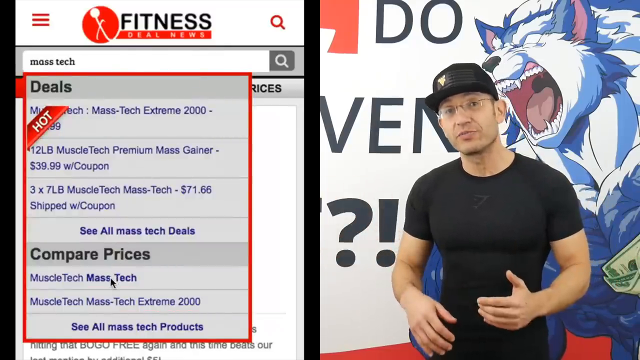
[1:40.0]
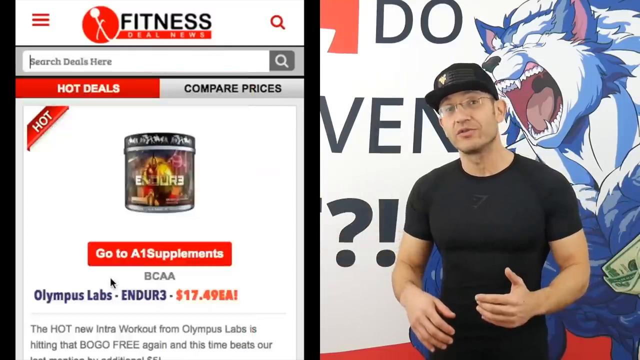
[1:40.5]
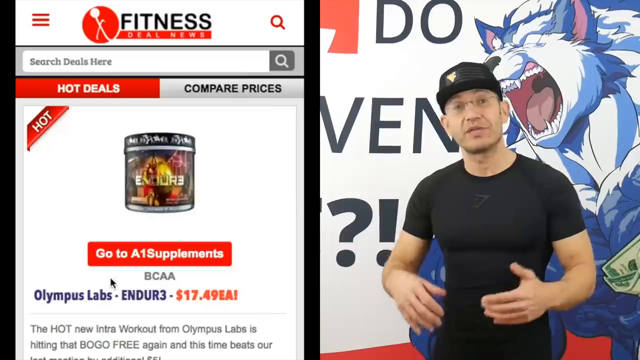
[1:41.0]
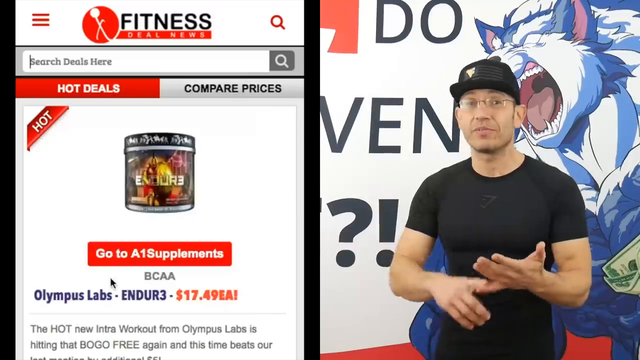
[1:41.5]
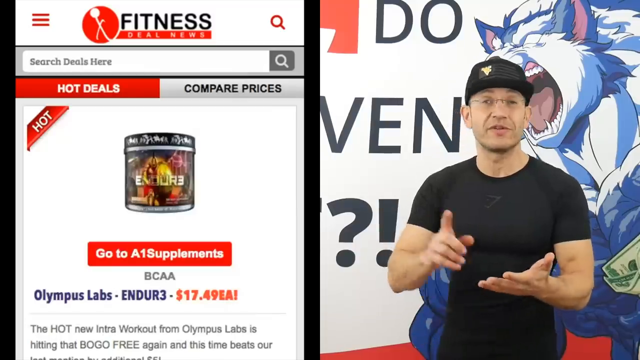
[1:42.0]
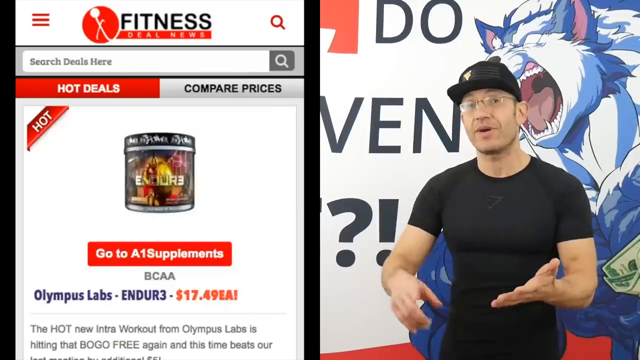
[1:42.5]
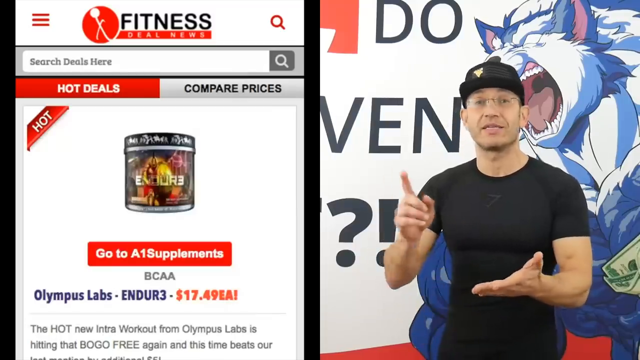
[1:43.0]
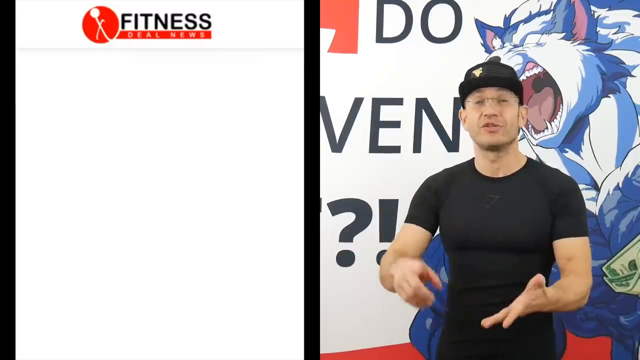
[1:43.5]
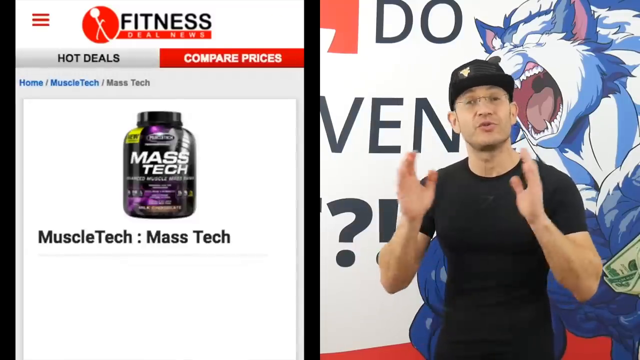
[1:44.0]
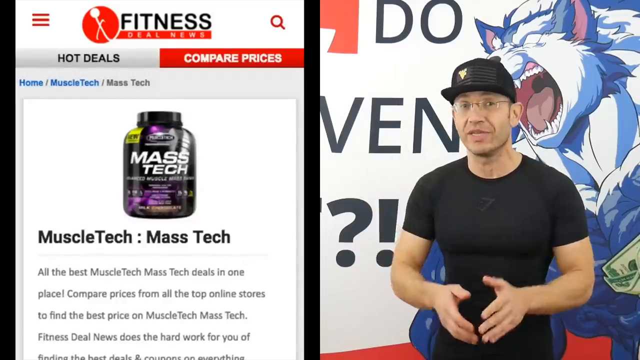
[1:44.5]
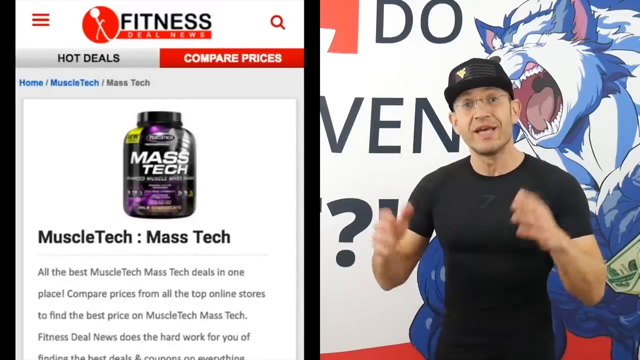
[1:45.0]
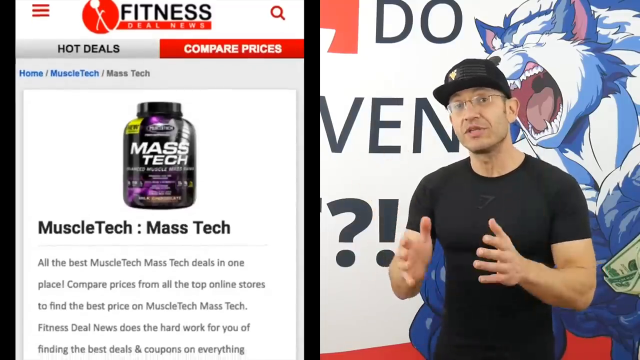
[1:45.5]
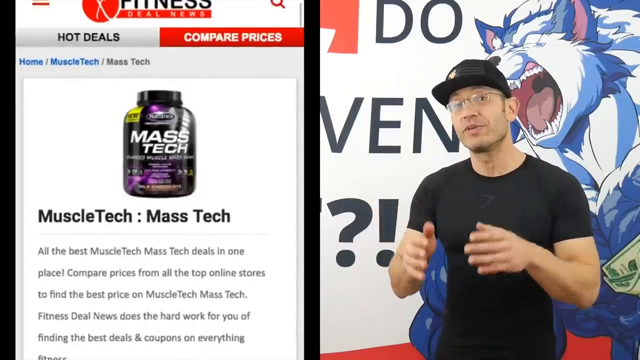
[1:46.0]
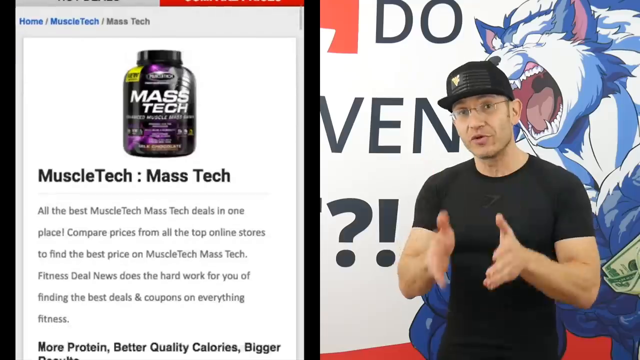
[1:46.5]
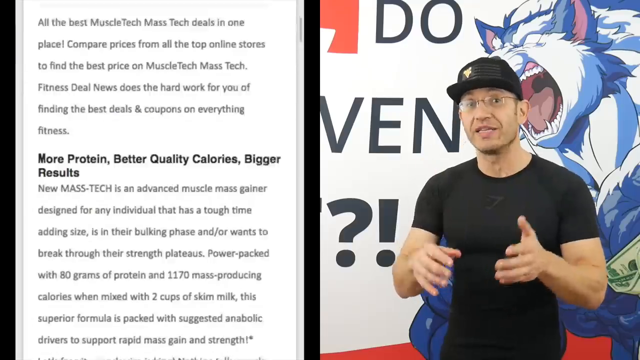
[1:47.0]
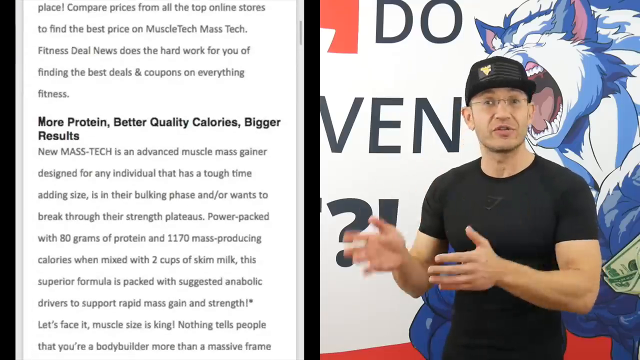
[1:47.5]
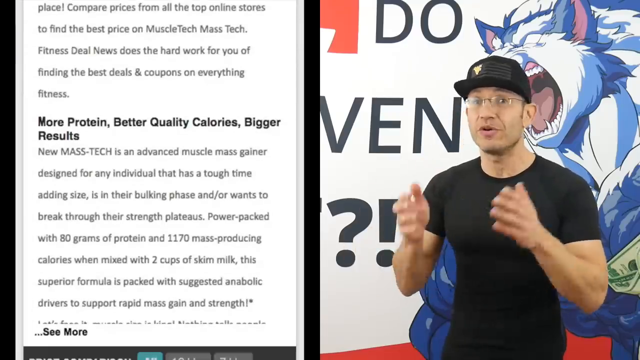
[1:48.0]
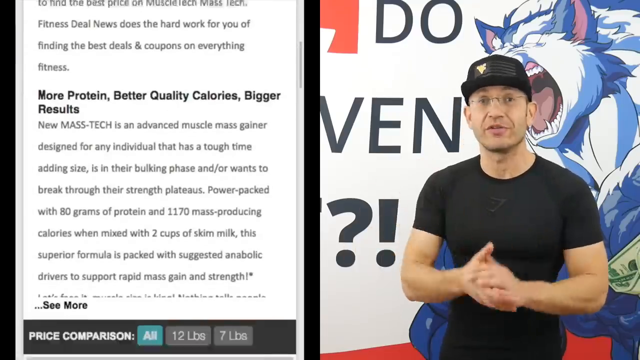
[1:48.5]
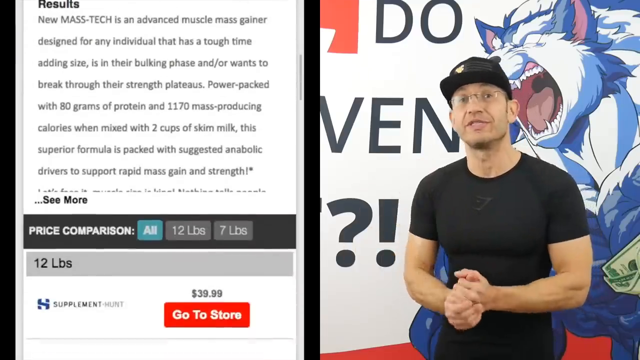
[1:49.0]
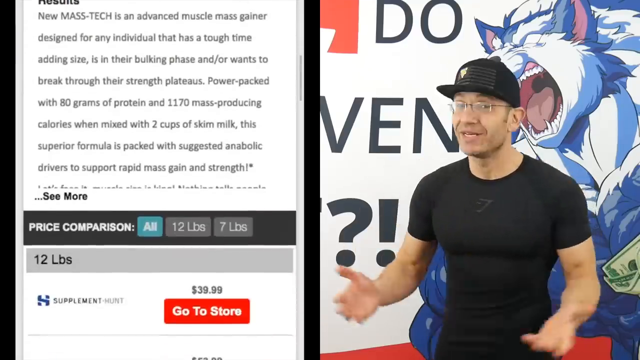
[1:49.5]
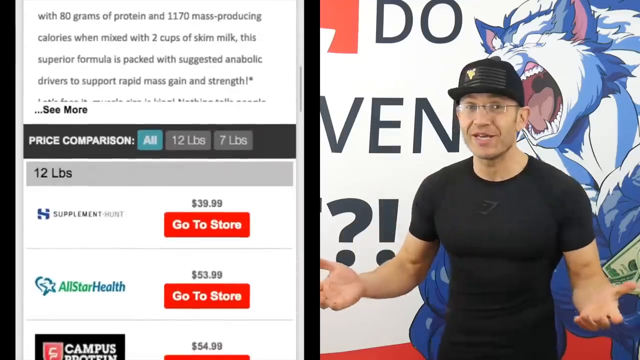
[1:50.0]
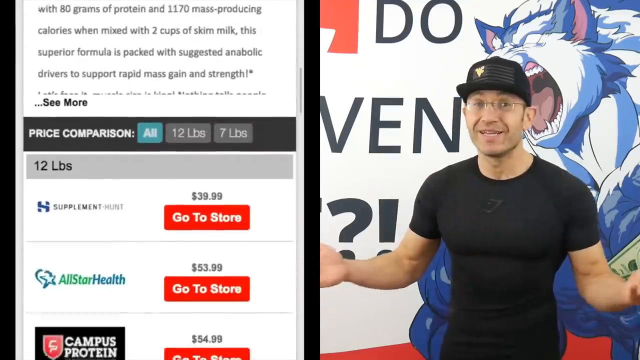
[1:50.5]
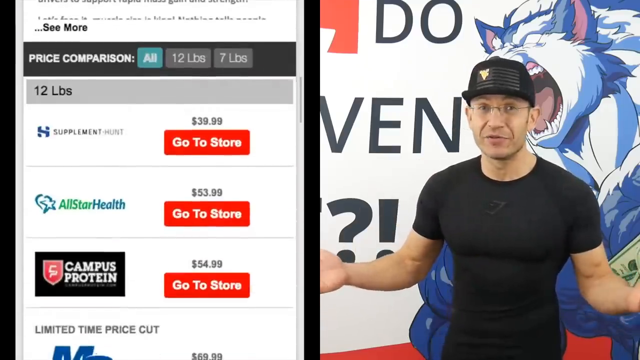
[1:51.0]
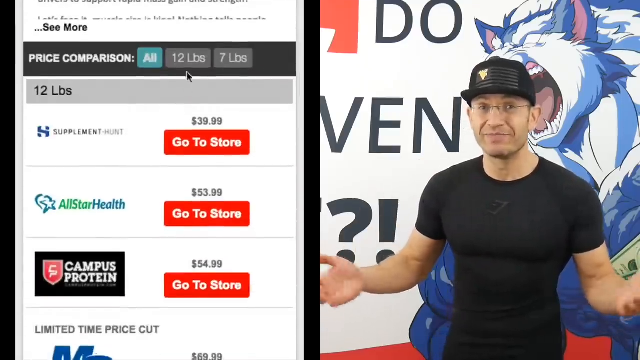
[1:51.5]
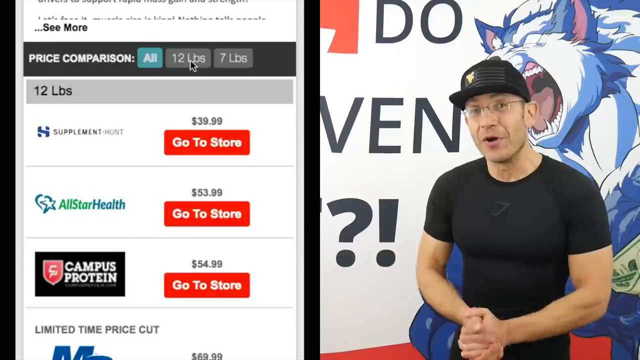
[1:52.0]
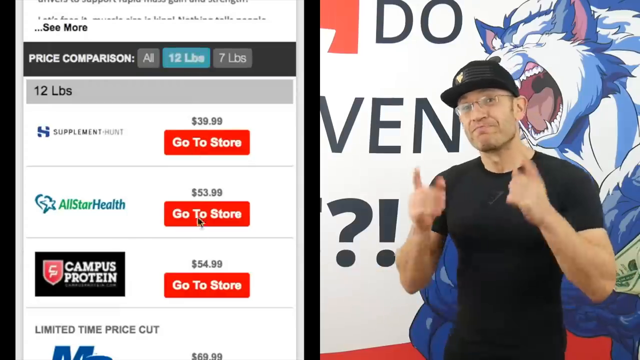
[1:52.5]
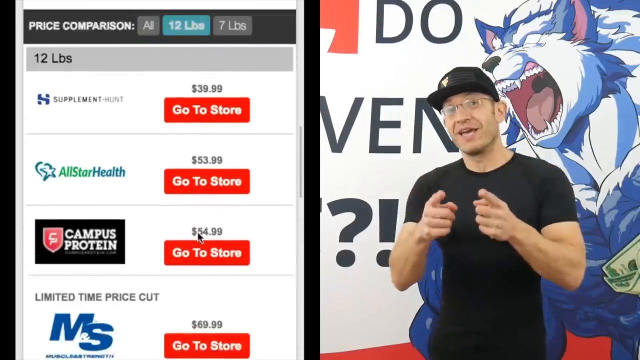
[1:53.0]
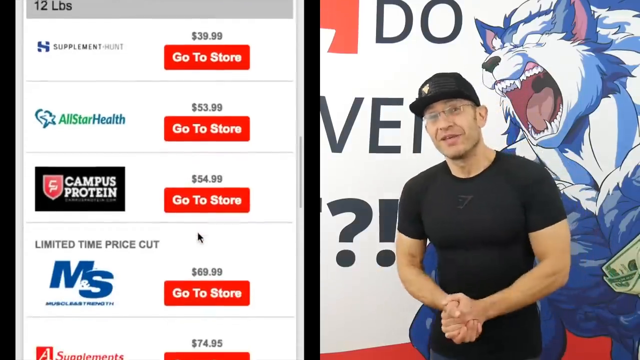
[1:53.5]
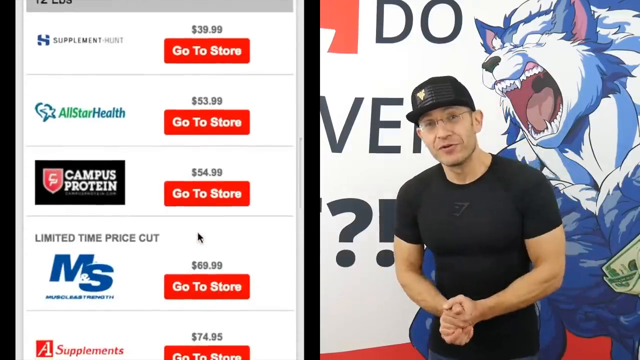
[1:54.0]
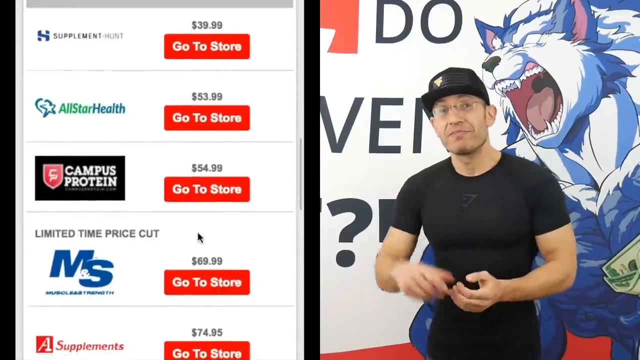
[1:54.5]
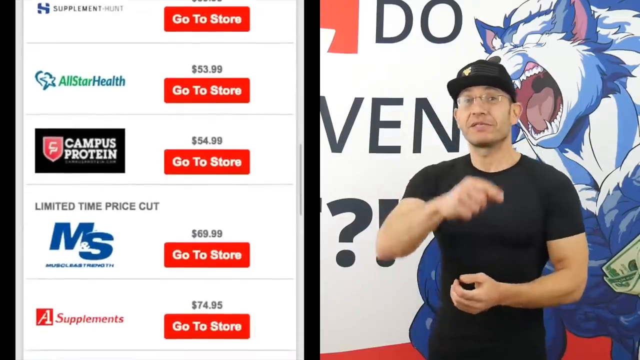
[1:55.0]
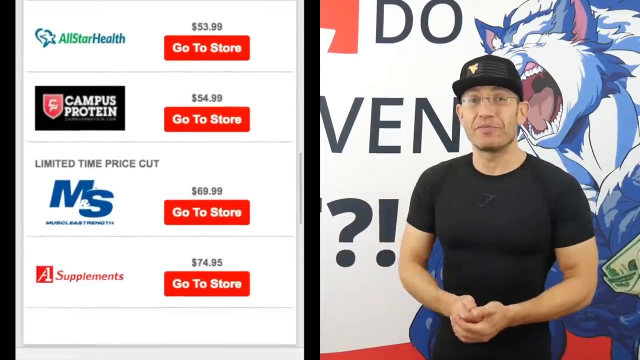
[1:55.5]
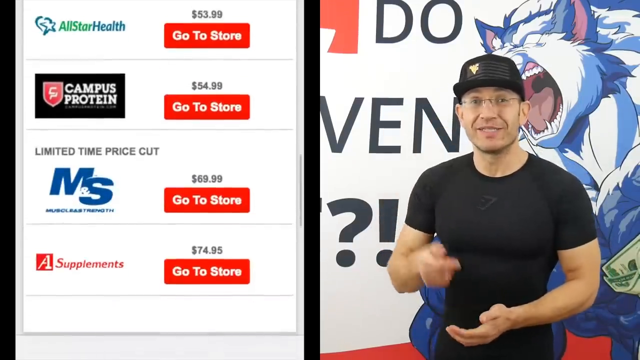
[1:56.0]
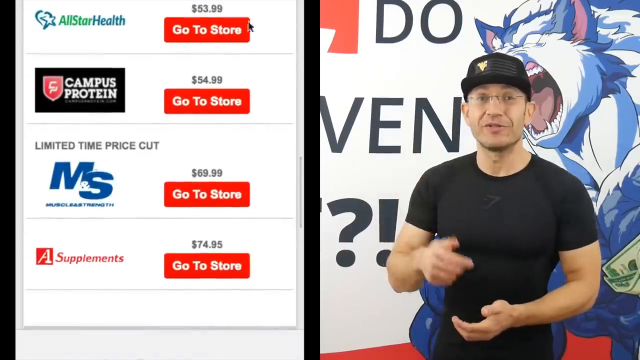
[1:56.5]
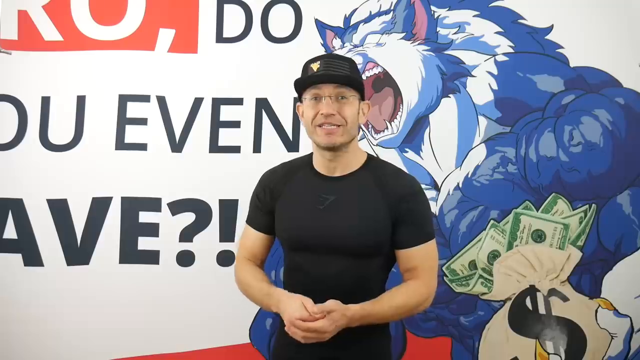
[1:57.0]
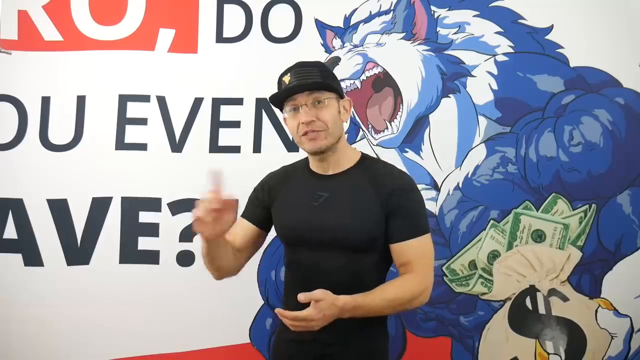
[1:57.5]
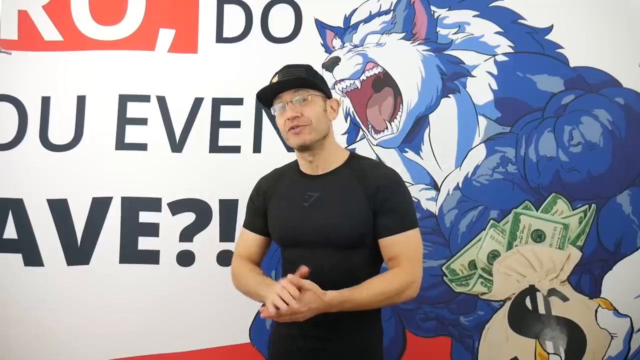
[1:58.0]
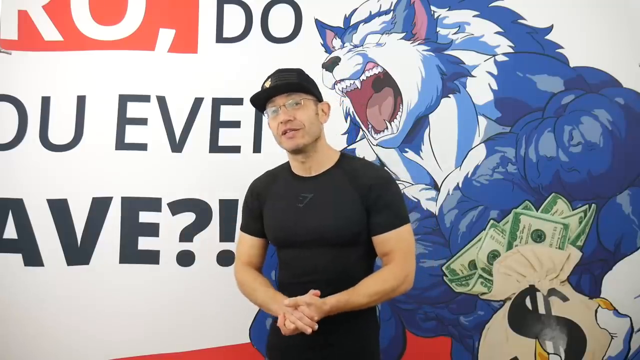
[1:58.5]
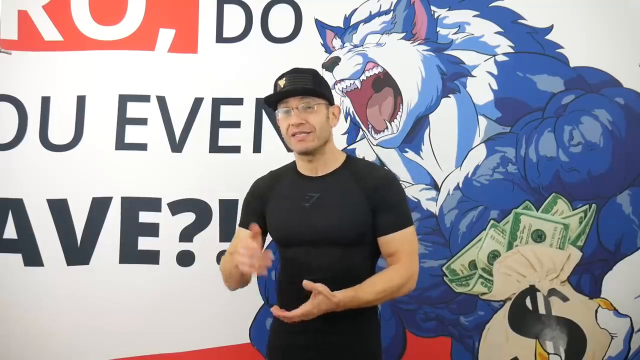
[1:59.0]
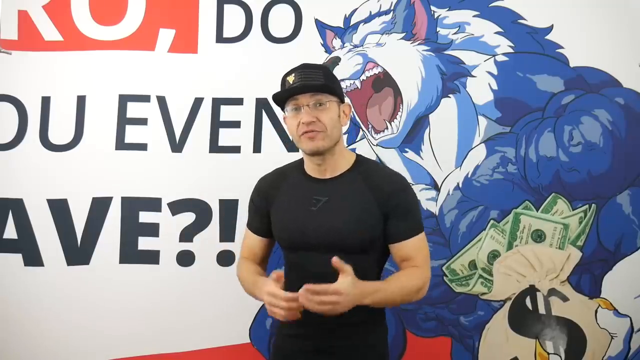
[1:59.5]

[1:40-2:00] A man in a black shirt and a black hat stands in front of a backdrop with what looks like a graphic illustration of a large, muscular, growling humanoid wolf-like creature. On the left side of the screen, a web page called Fitness Deal News is open. Someone searches for something called MuscleTech Mass Tech, and items appear on a drop-down menu under the Hot Deals banner. The cursor clicks on that product, and an ad for something called Olympus Labs ENDUR3 appears. Then another item called MuscleTech: Mass Tech appears at the top of the page. Someone scrolls down through the product description and clicks on 12 pounds as the size choice for the item, then continues scrolling down to go-to-store options.